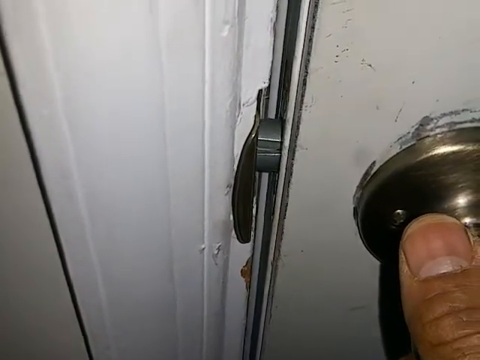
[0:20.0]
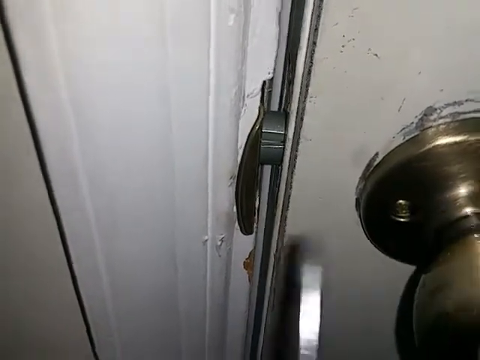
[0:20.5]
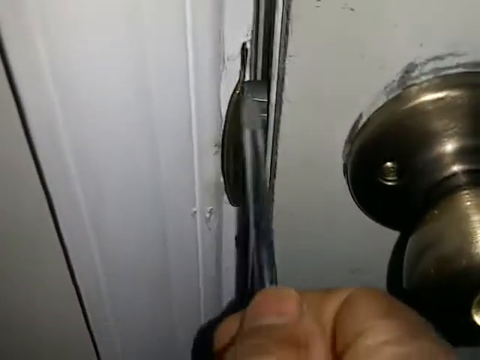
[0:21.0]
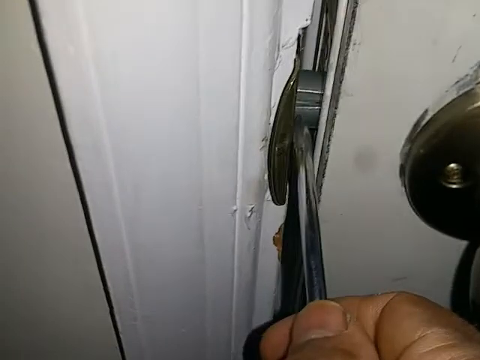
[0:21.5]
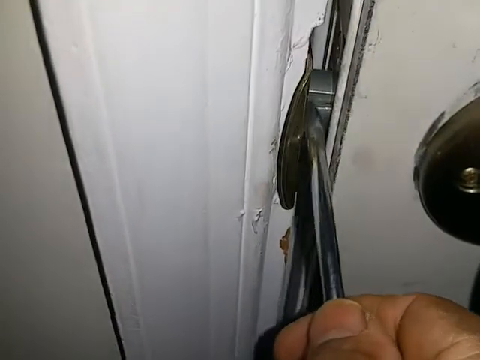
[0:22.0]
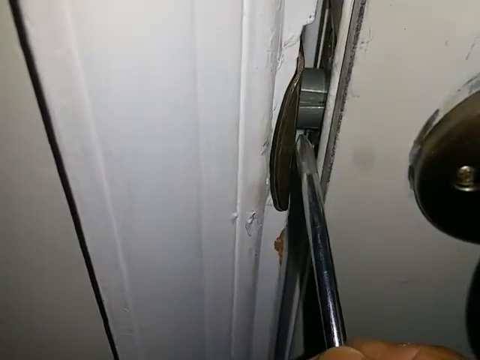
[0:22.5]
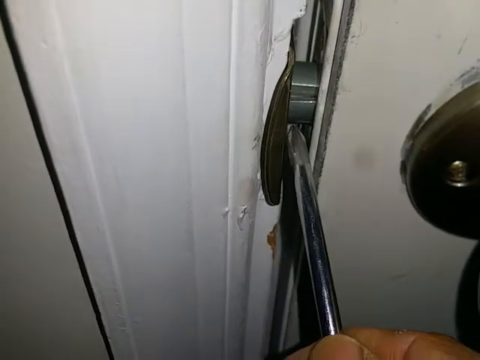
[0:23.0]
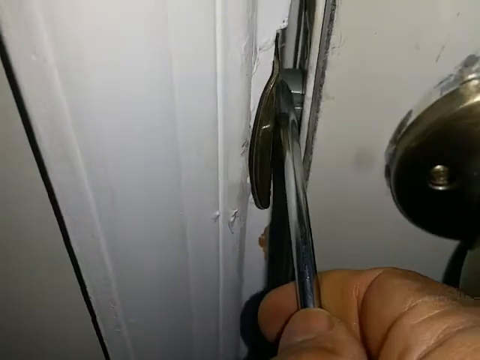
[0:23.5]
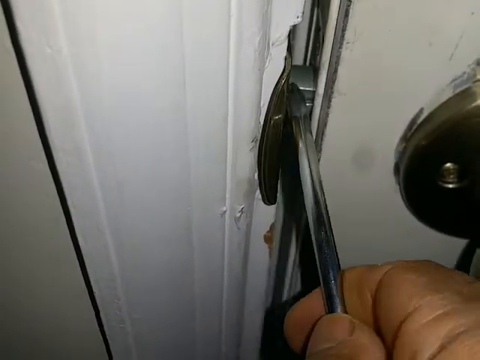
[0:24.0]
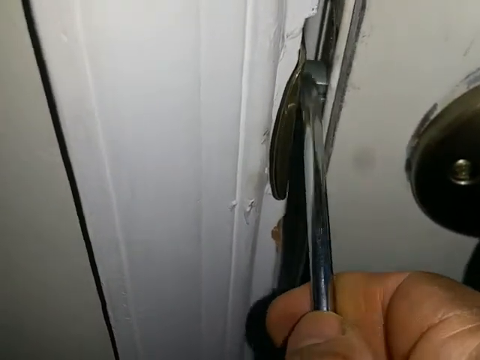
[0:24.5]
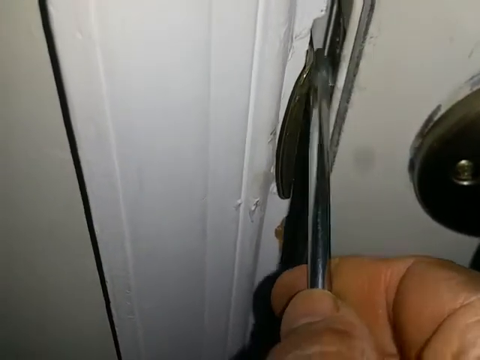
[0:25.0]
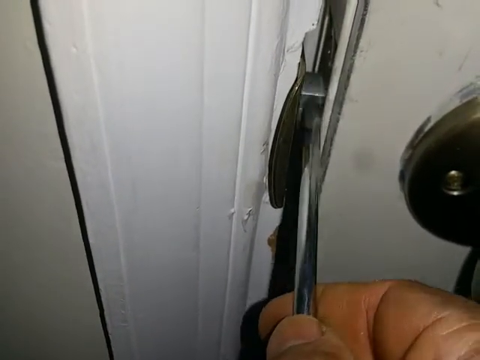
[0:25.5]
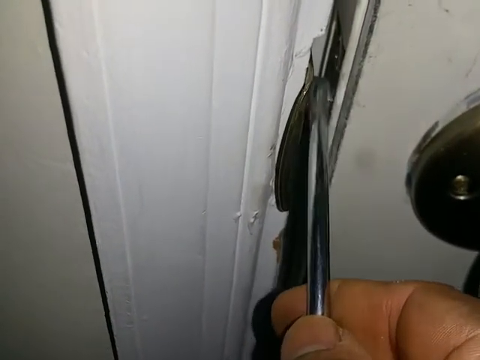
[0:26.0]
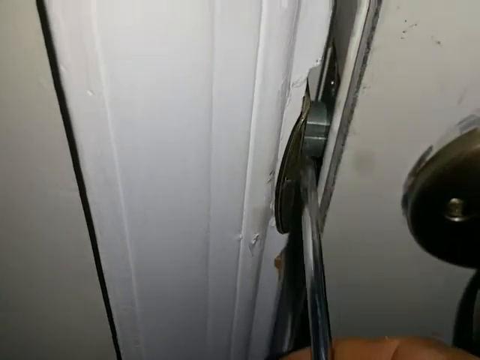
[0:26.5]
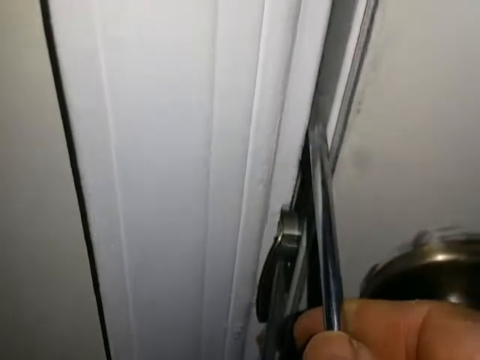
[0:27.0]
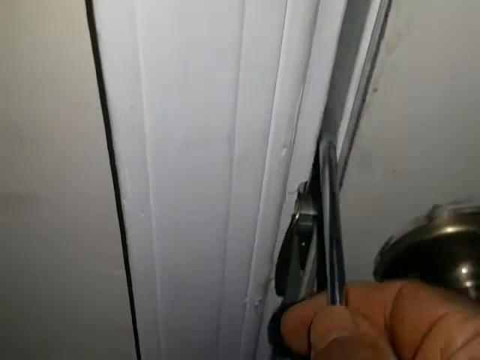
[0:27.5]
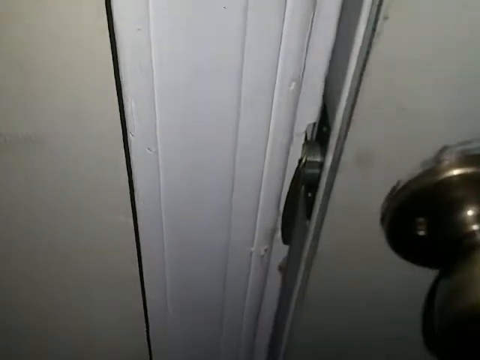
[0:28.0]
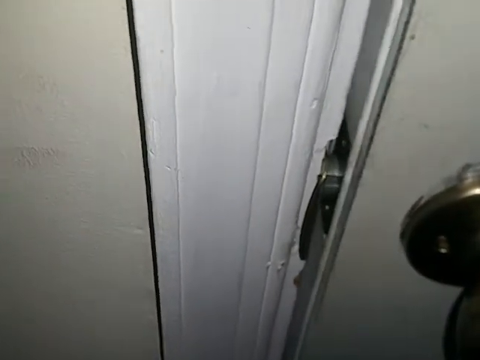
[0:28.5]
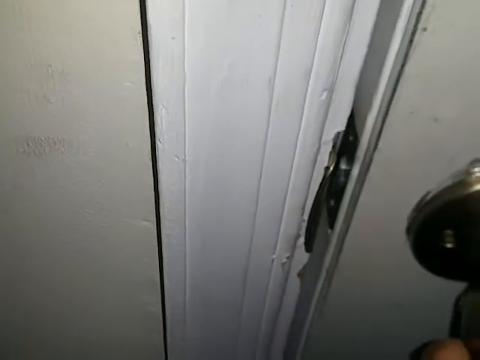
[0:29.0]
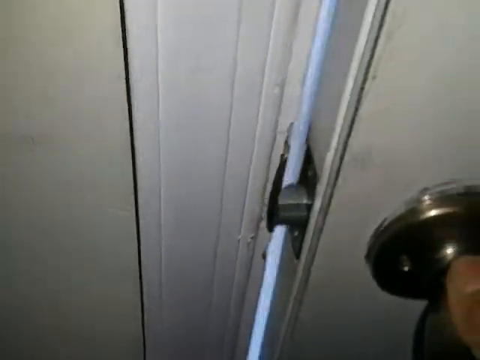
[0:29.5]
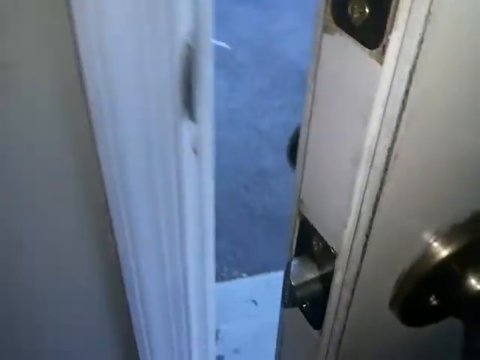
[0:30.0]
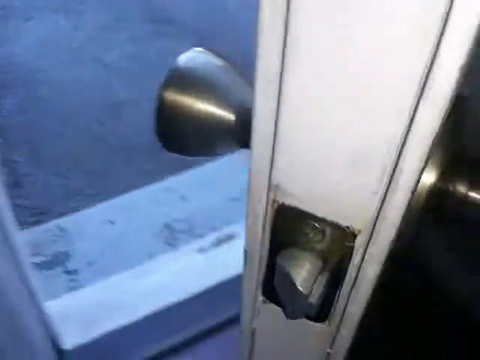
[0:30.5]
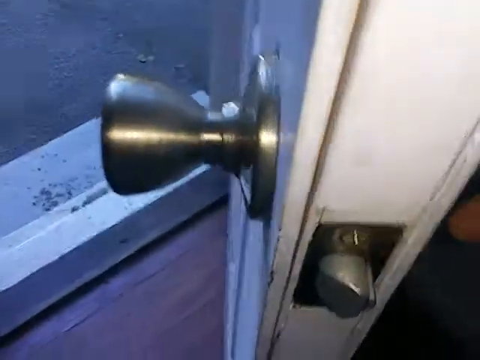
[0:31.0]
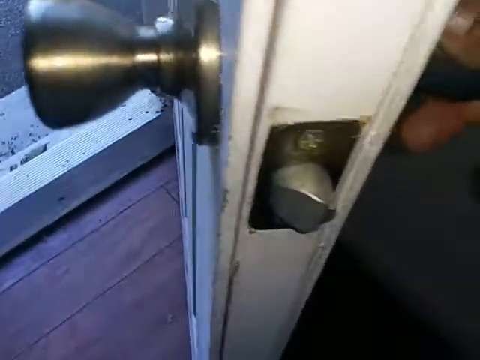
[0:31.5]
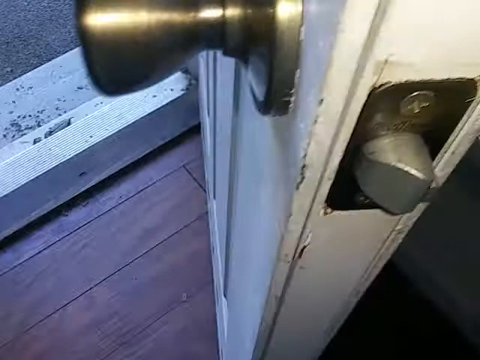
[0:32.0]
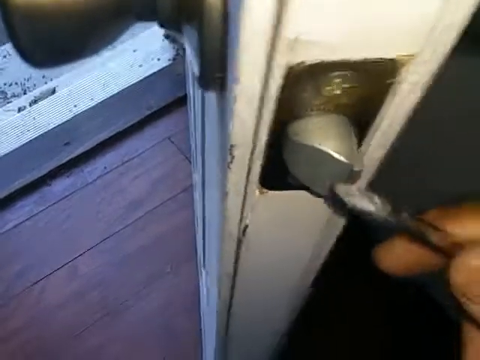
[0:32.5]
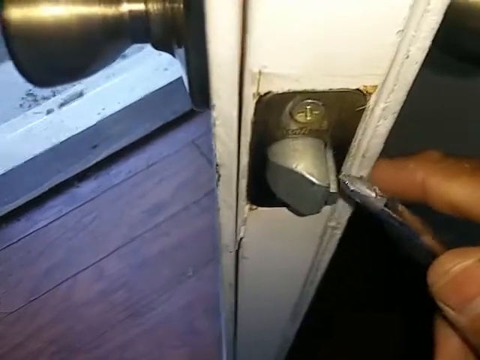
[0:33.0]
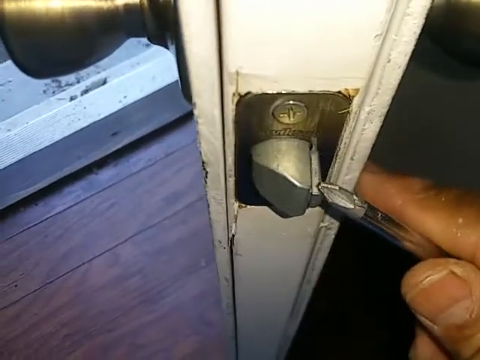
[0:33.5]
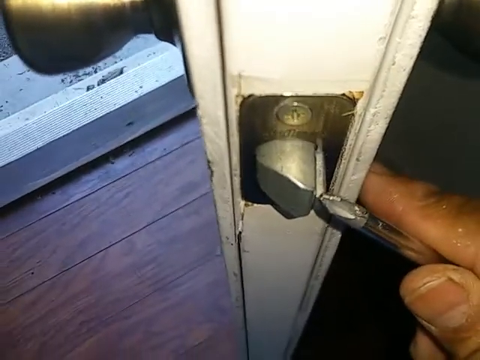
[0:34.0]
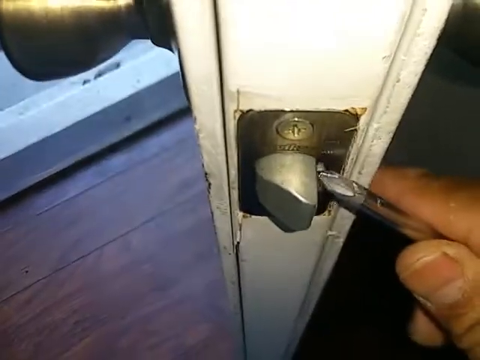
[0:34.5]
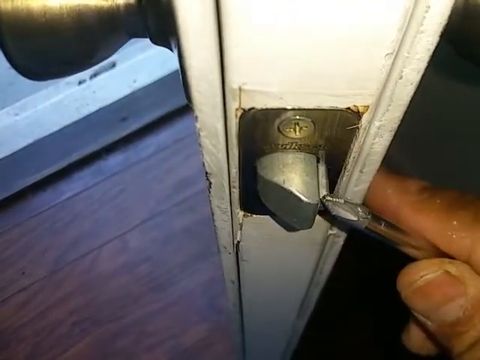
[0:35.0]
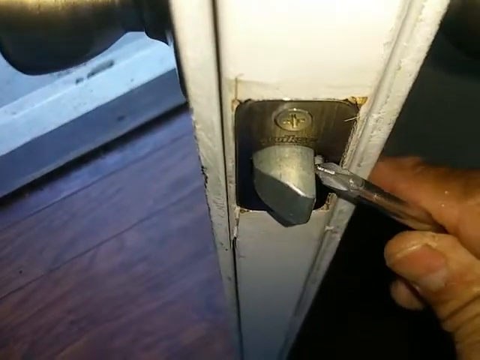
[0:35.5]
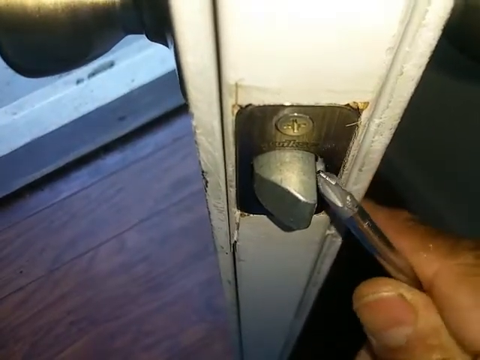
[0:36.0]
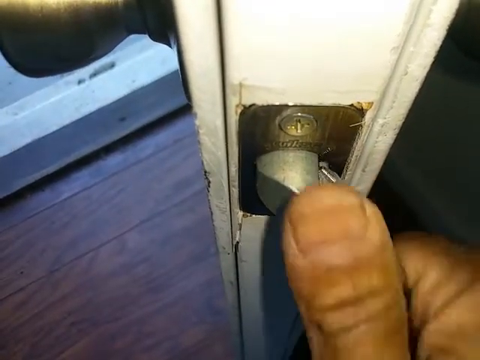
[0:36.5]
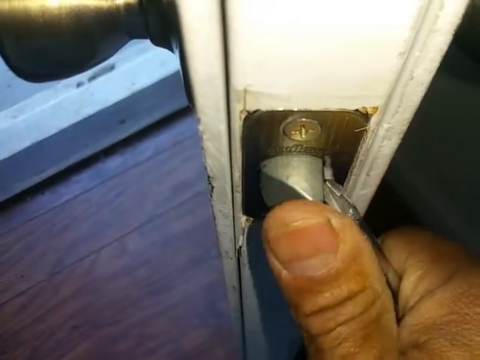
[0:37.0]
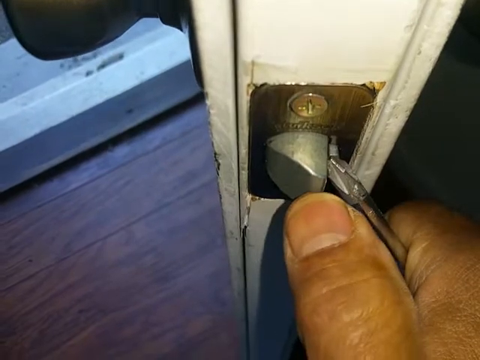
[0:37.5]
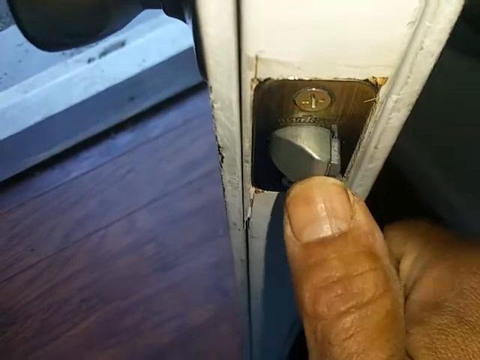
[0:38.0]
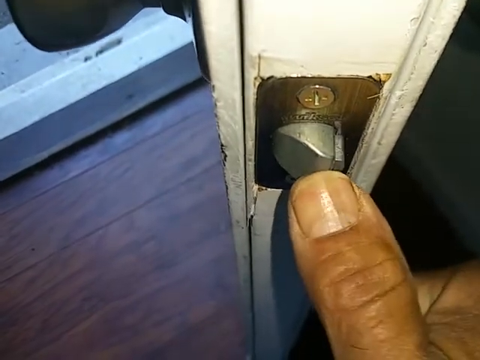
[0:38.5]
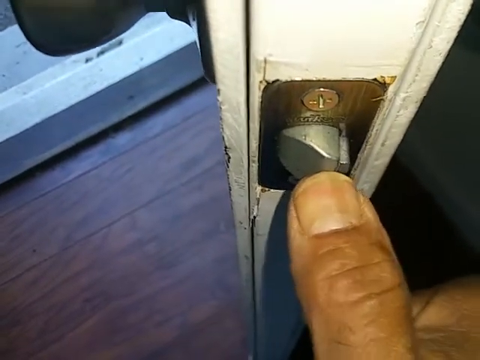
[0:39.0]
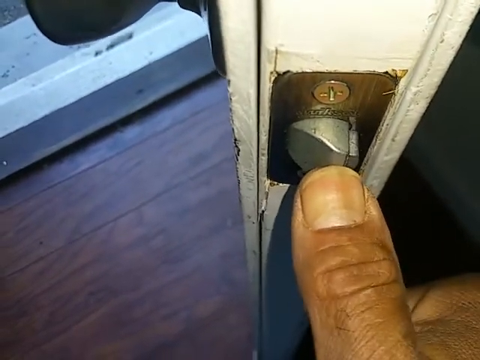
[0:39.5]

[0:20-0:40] The screwdriver continues to point at the gap by the door, and the door opens, revealing the outdoors. The door latch is then shown from a side view of the door, with the screwdriver poking into the latch and pushing in against it. The man opens the door with his right hand, and his thumb is visible with buildup and dirt under the nail. When the door opens, the circular silver exterior doorknob is also shown. The floor is a dark-colored laminate hardwood, while outside the door is concrete. It appears to be a video on how to replace the door latch and fix its alignment.